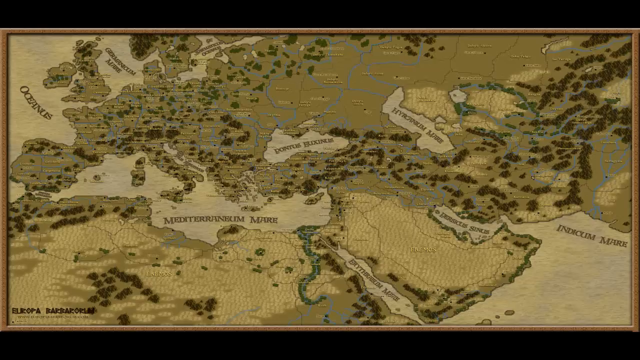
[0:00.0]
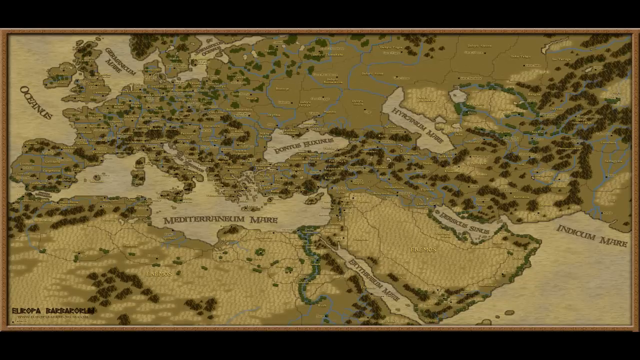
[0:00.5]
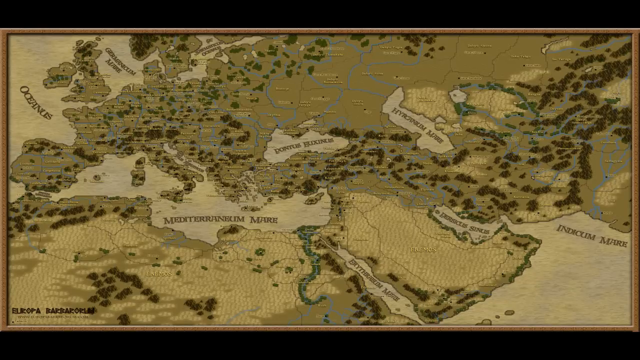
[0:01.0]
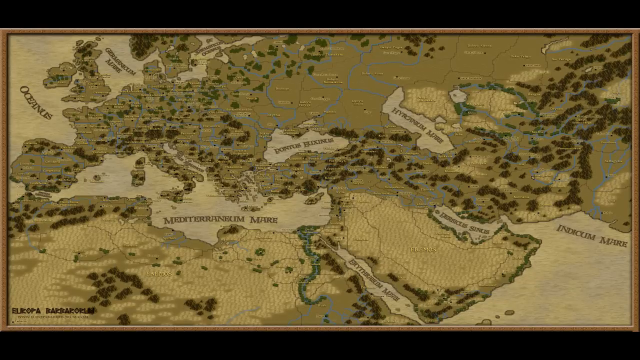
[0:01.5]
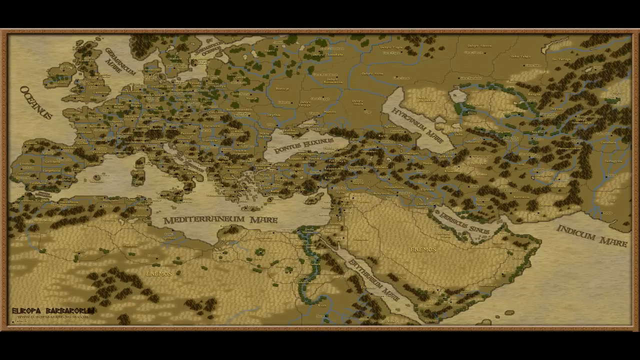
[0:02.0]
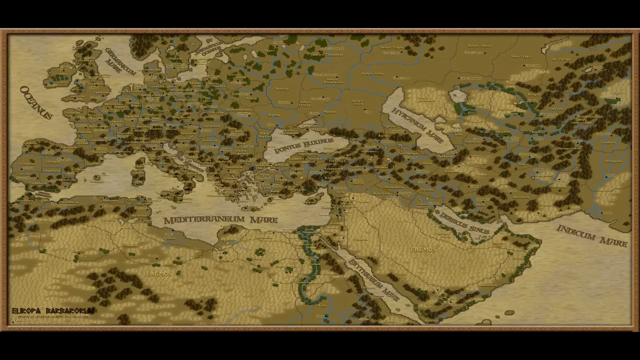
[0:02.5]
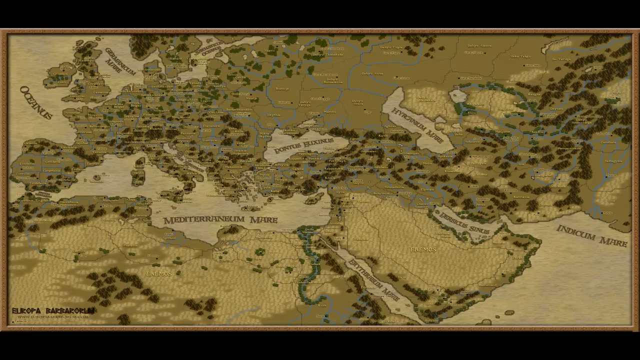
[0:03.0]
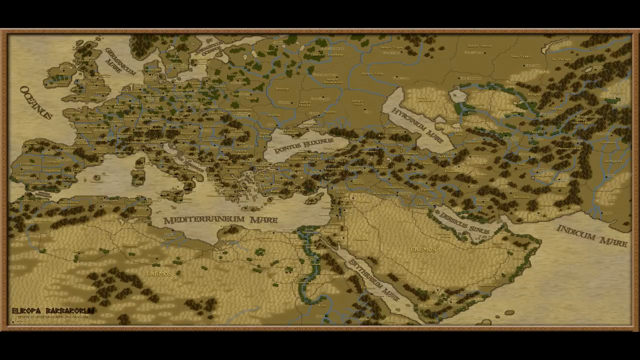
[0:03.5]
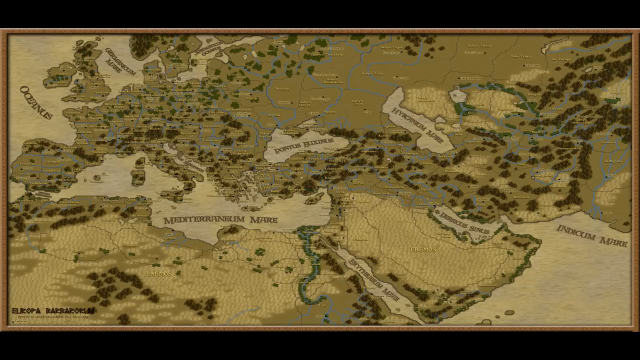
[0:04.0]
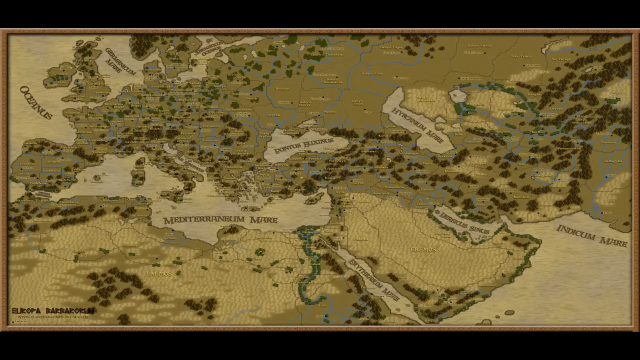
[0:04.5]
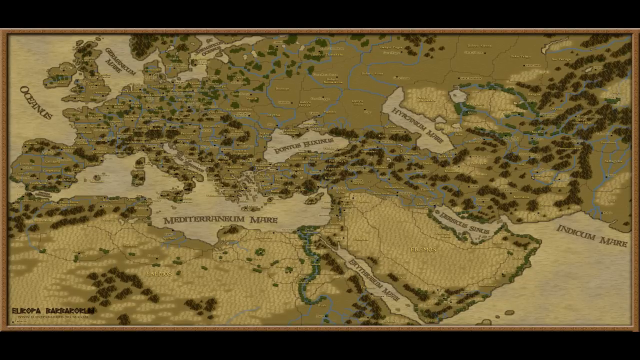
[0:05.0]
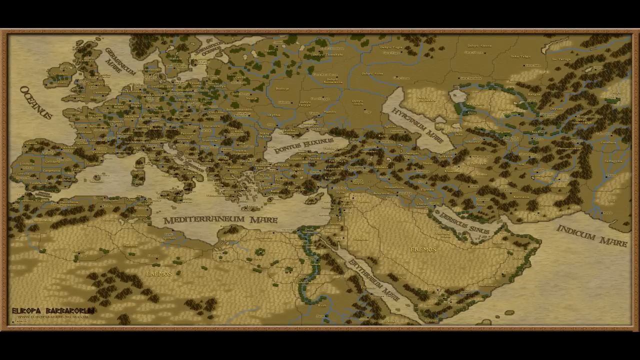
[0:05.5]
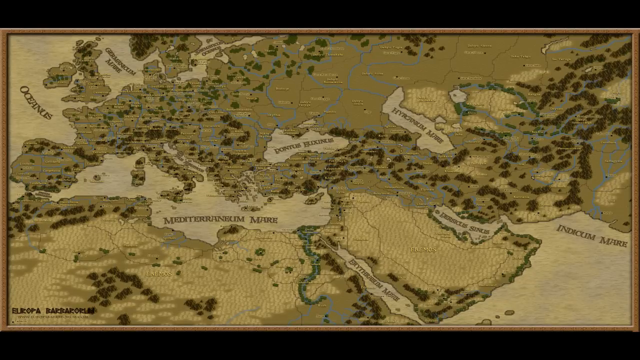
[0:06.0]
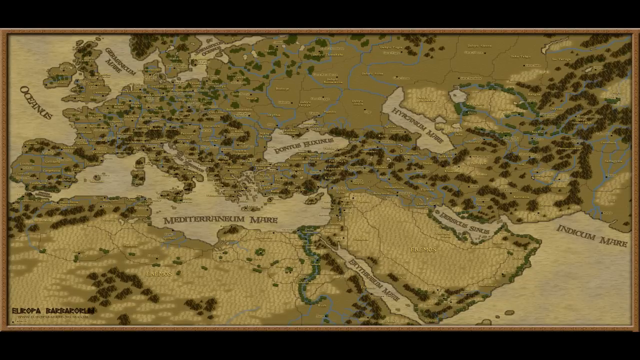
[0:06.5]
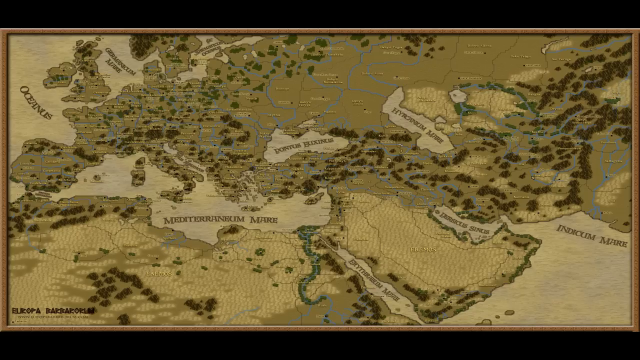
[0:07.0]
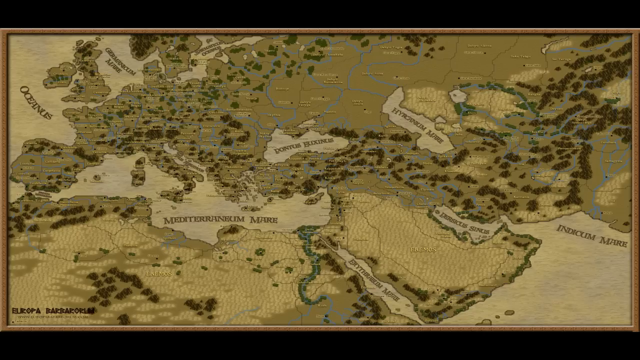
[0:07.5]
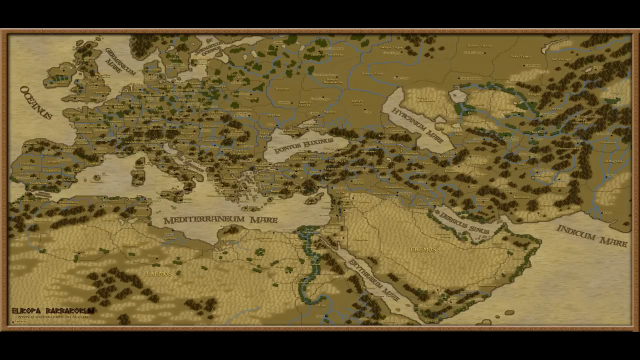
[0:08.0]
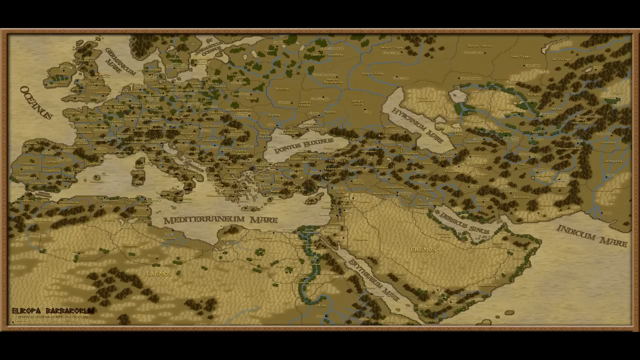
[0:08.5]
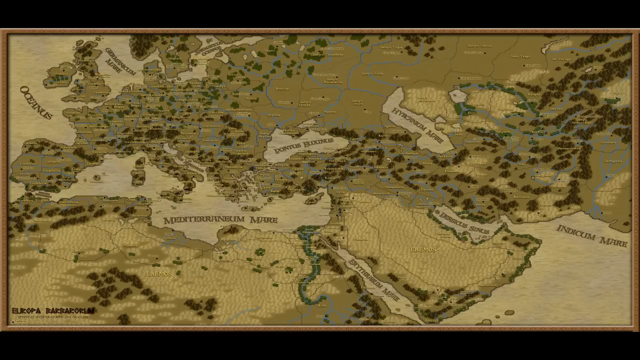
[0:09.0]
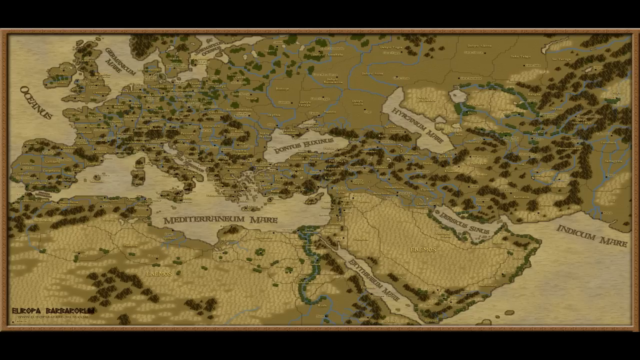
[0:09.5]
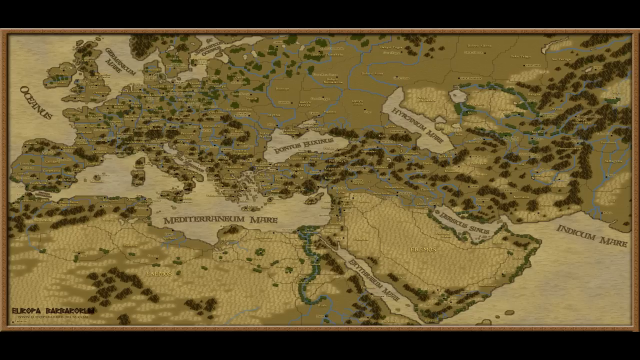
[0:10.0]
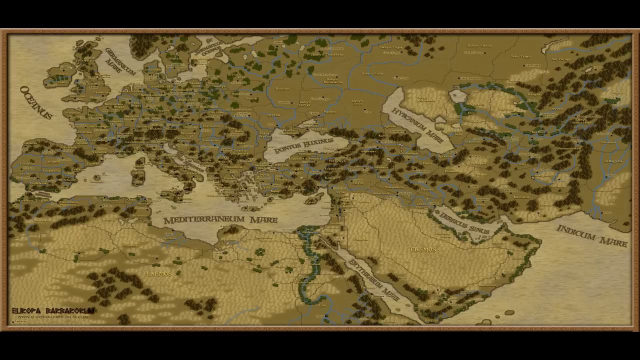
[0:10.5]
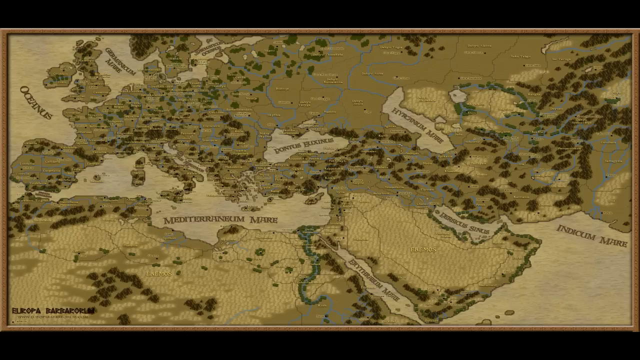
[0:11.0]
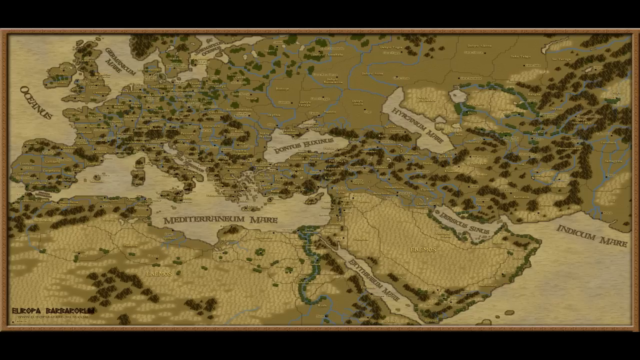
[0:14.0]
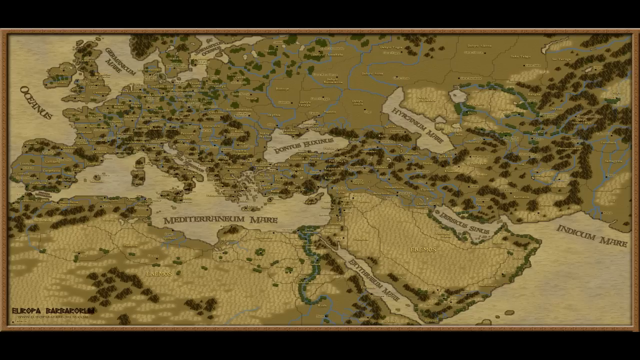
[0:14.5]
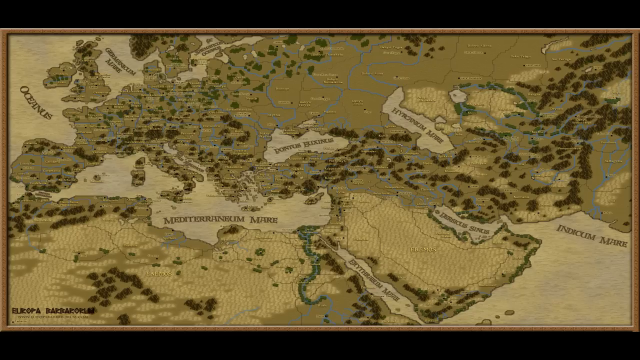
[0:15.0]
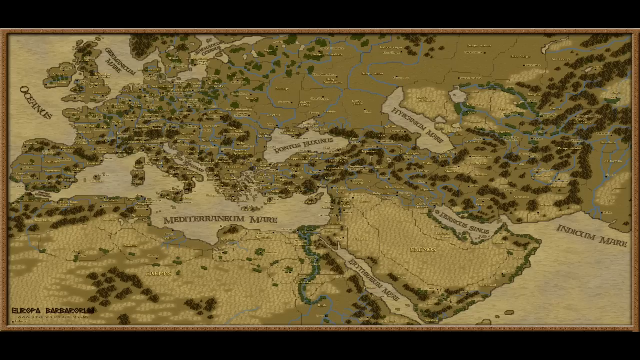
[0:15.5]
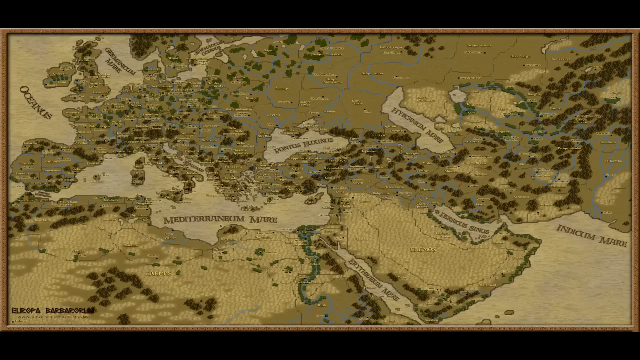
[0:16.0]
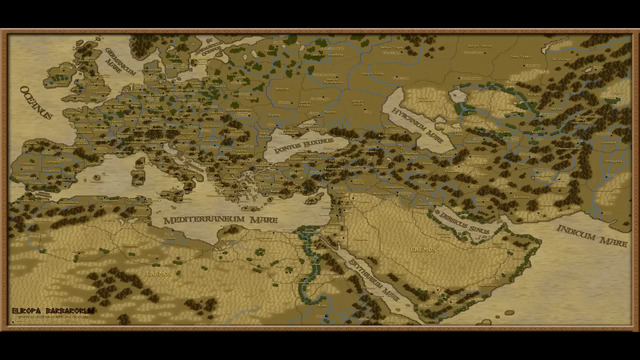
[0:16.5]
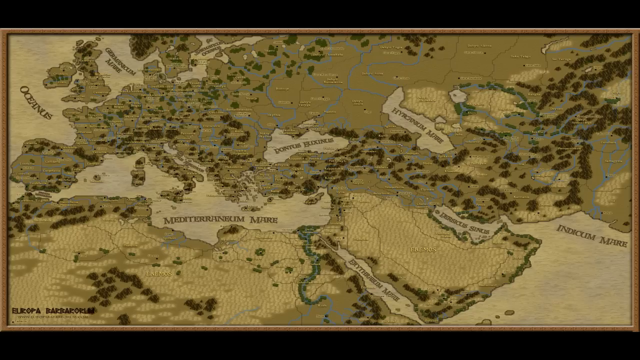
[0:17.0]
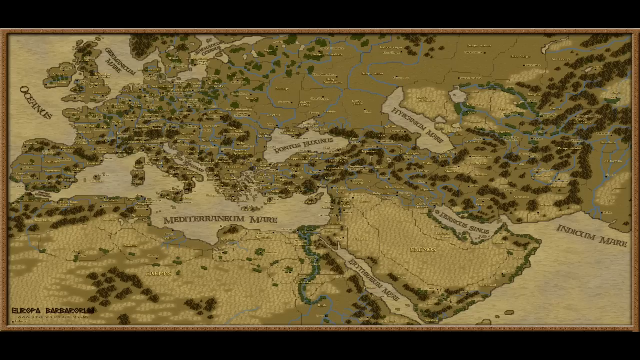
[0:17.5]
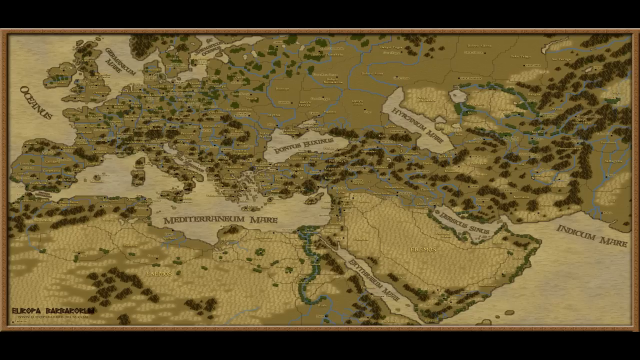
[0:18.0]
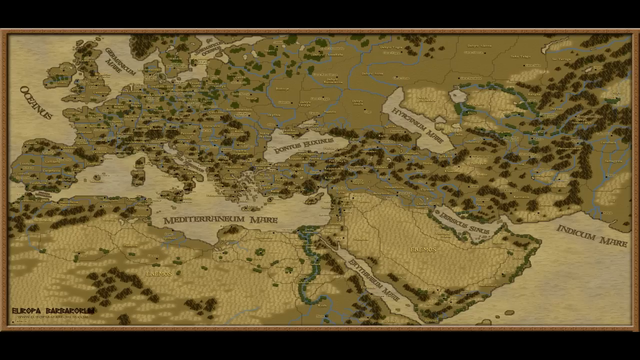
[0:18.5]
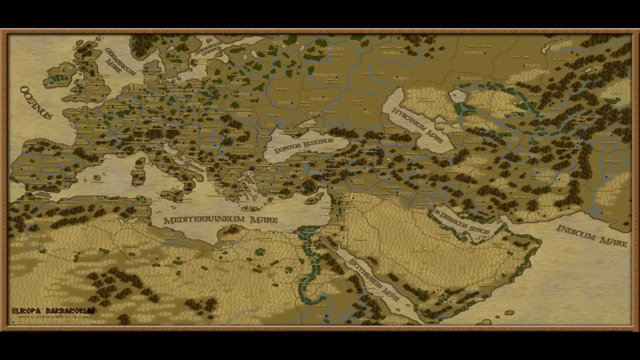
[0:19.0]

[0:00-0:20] A map is shown with text reading "the Mediterranean" and labels in a number of different languages that are hard to understand. It appears to feature the Middle East and Northern Africa. The map is in dark colors, beige and green. Nothing is moved or clicked on; it seems to be a still image of the map, with greenery and what look like mountain ranges, depicting areas of North Africa, Europe, the Middle East and Southeast Asia. The map stays in focus and nothing about it changes.